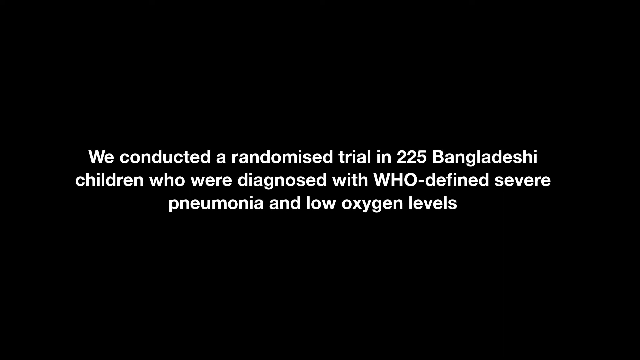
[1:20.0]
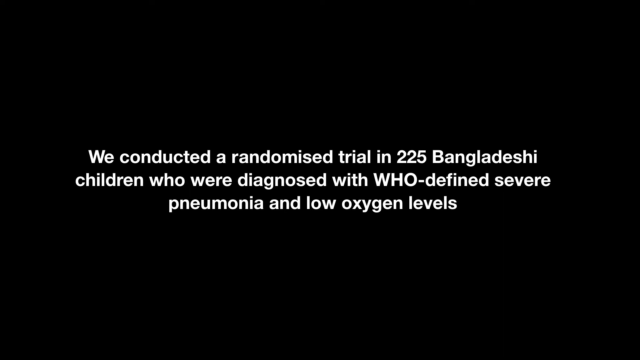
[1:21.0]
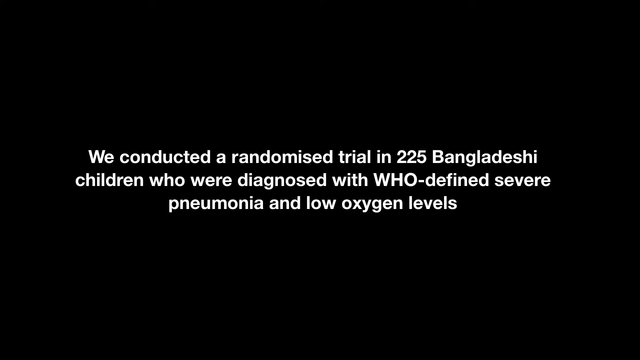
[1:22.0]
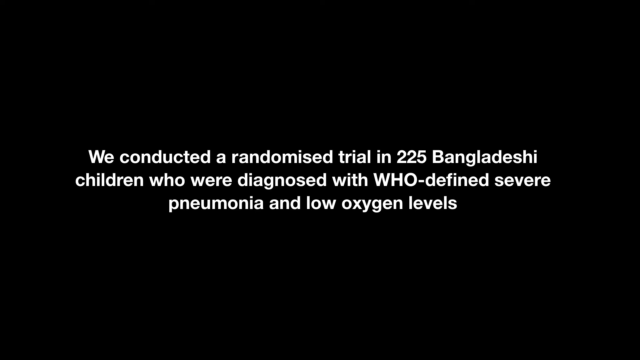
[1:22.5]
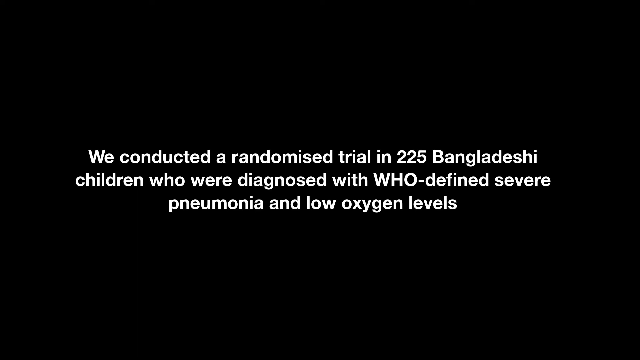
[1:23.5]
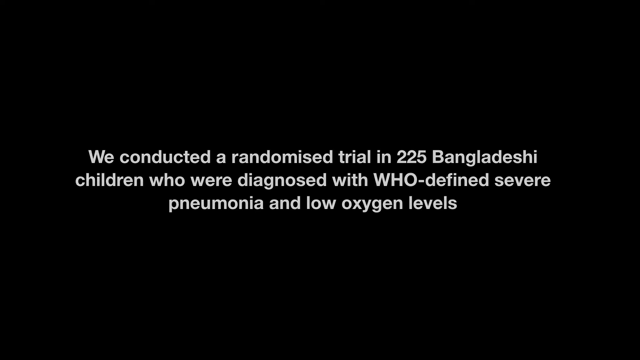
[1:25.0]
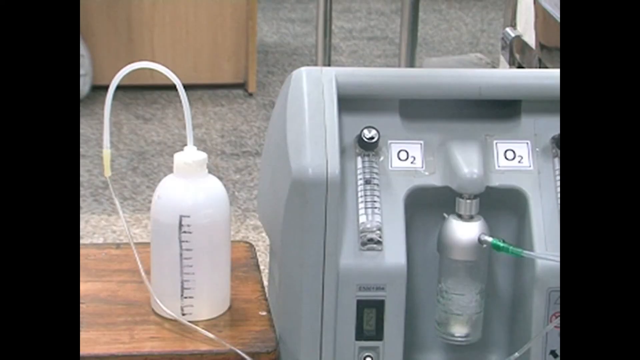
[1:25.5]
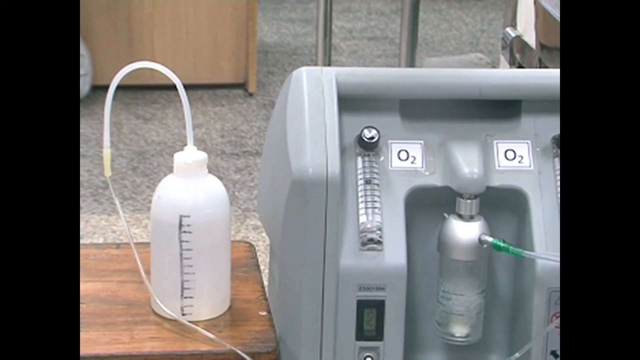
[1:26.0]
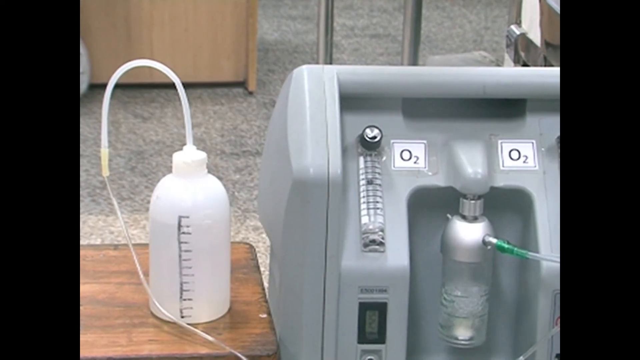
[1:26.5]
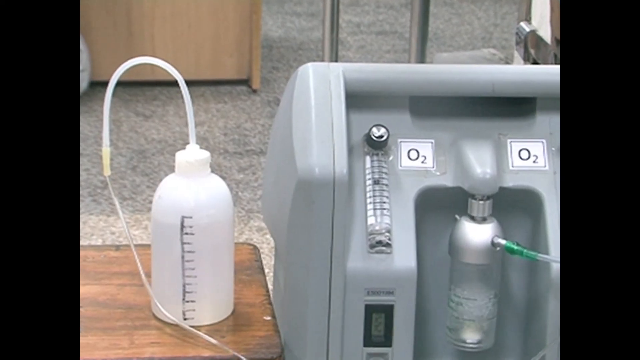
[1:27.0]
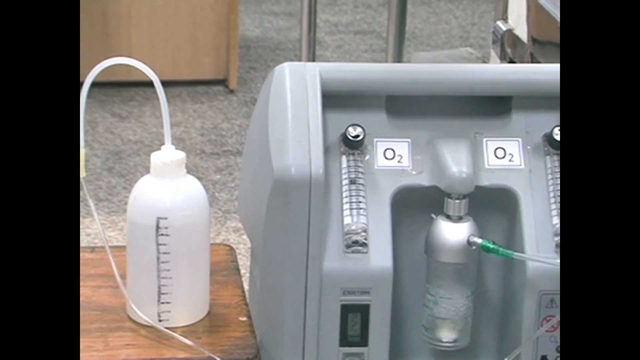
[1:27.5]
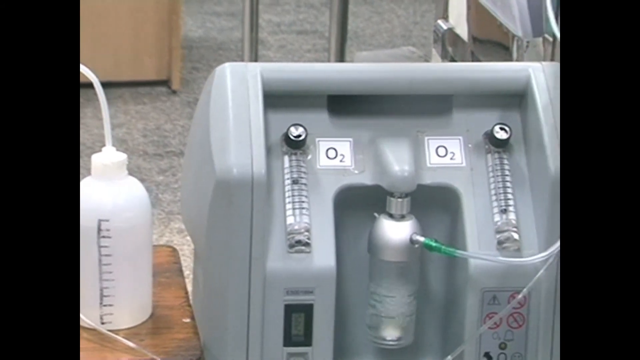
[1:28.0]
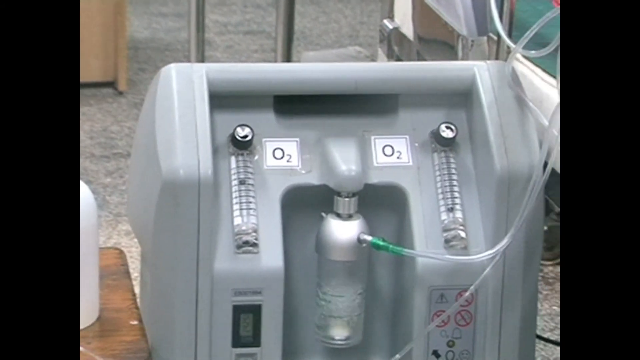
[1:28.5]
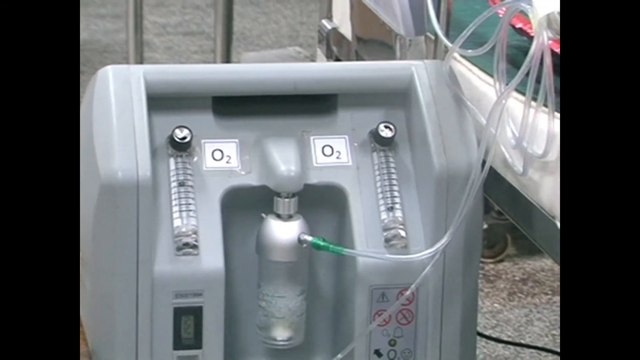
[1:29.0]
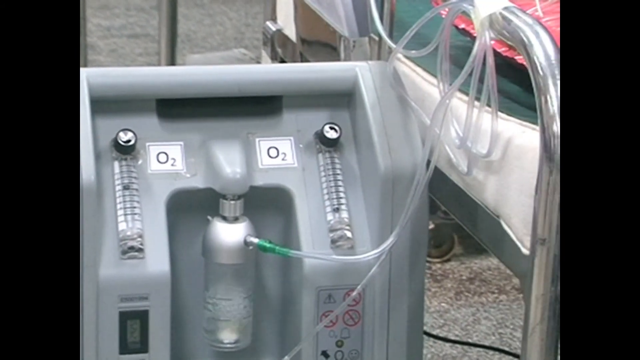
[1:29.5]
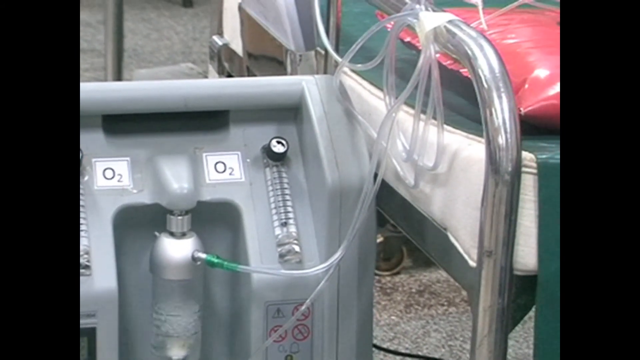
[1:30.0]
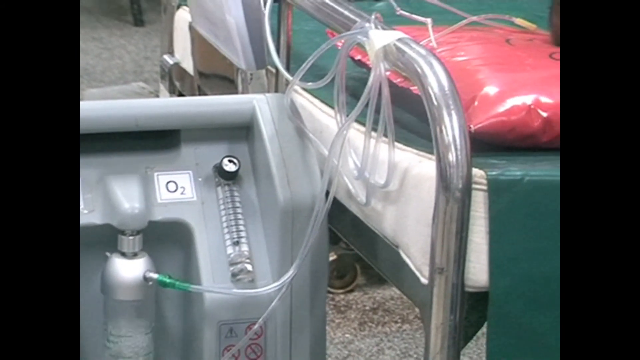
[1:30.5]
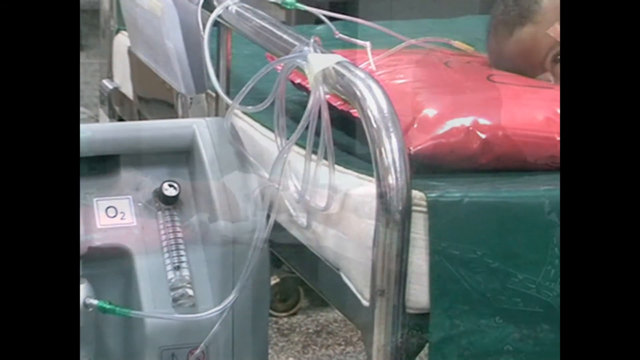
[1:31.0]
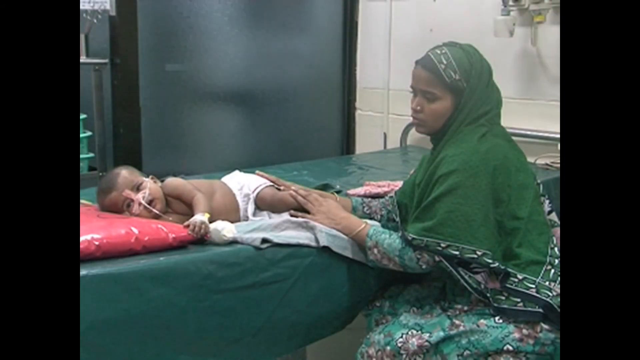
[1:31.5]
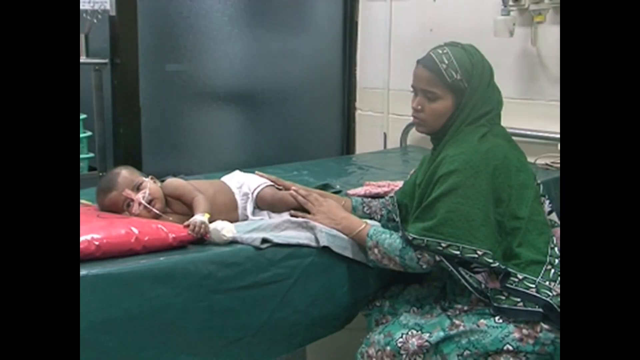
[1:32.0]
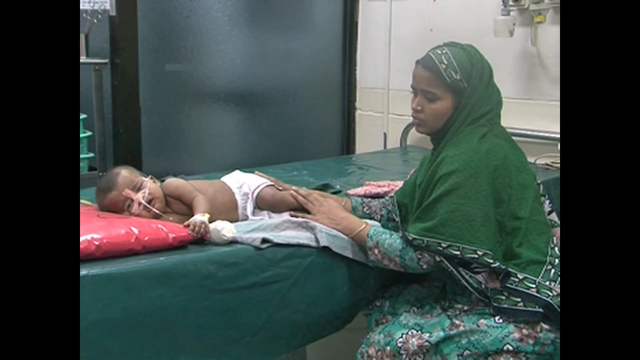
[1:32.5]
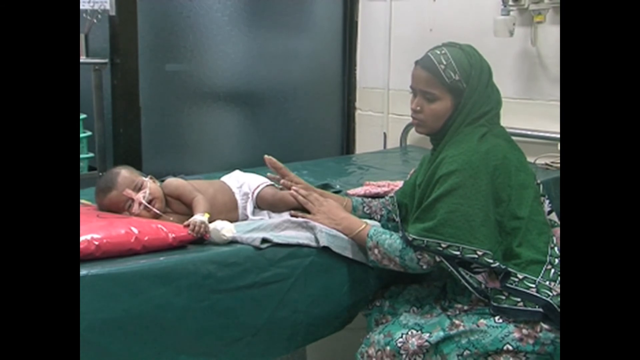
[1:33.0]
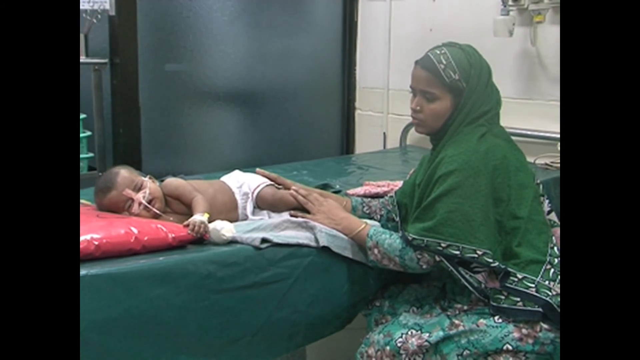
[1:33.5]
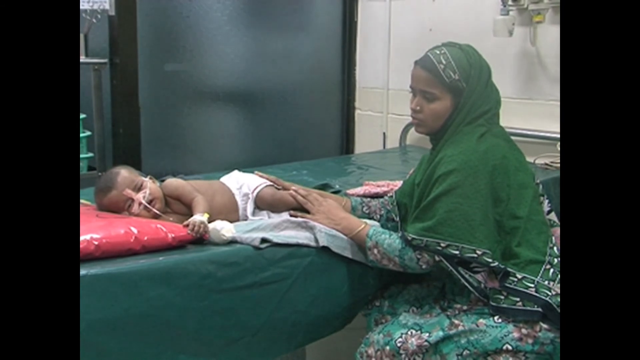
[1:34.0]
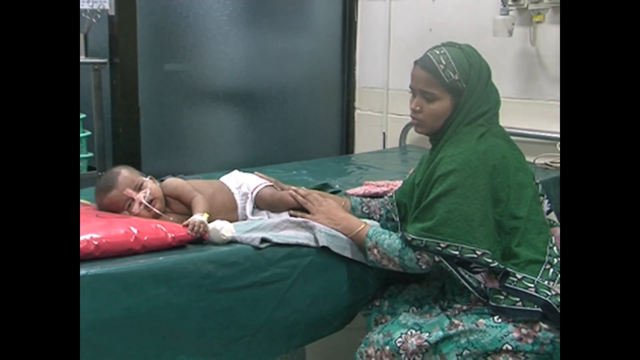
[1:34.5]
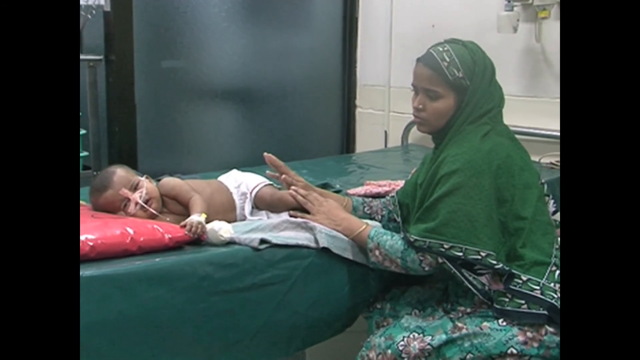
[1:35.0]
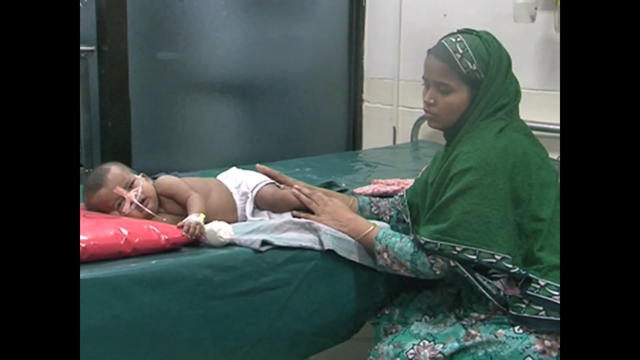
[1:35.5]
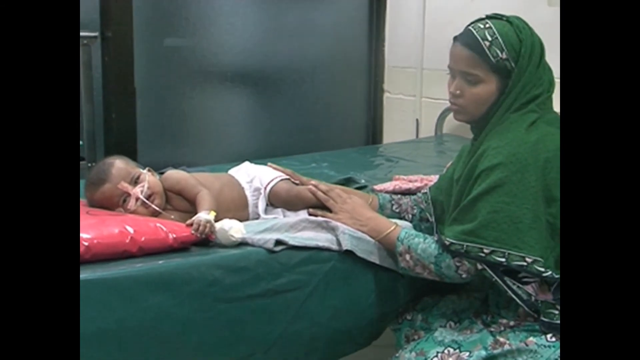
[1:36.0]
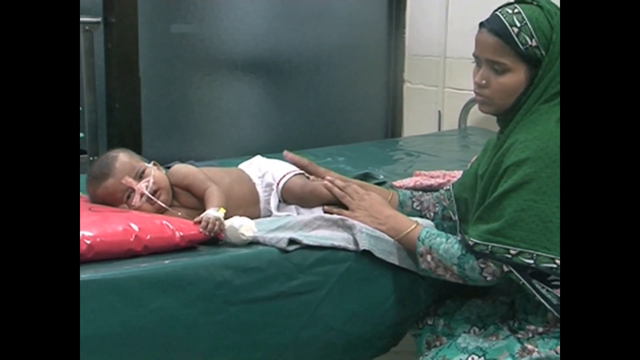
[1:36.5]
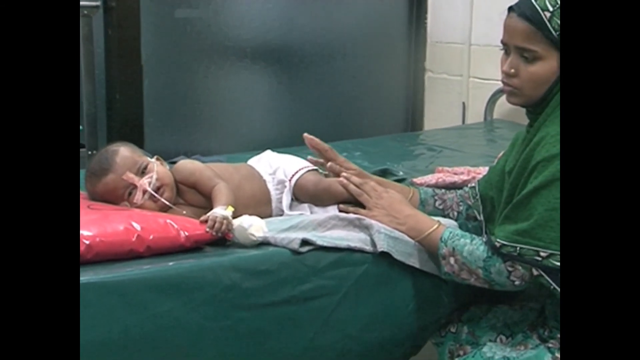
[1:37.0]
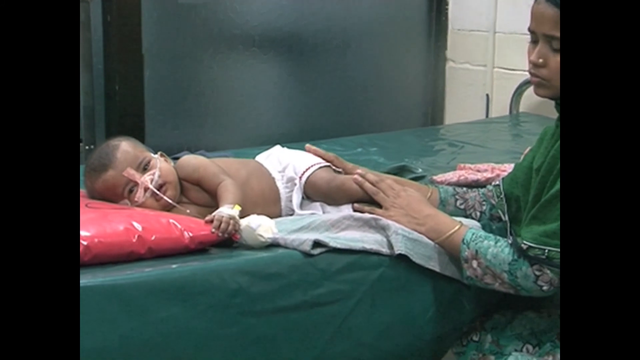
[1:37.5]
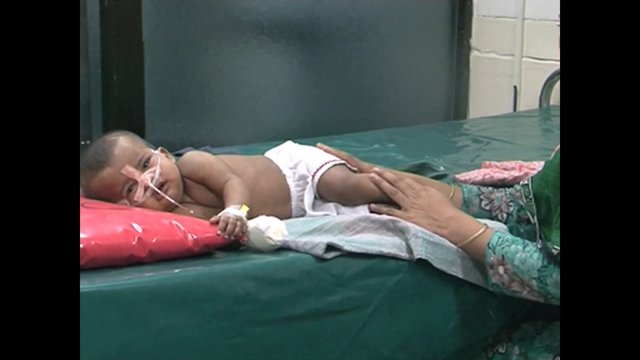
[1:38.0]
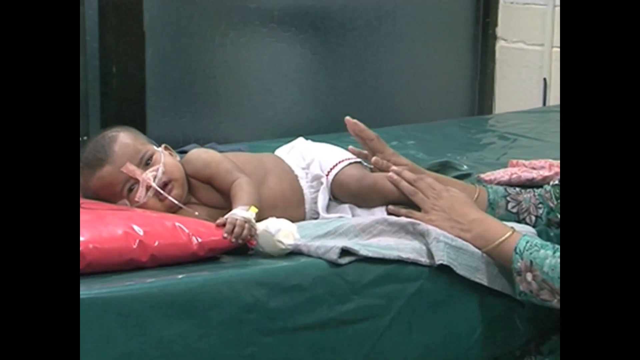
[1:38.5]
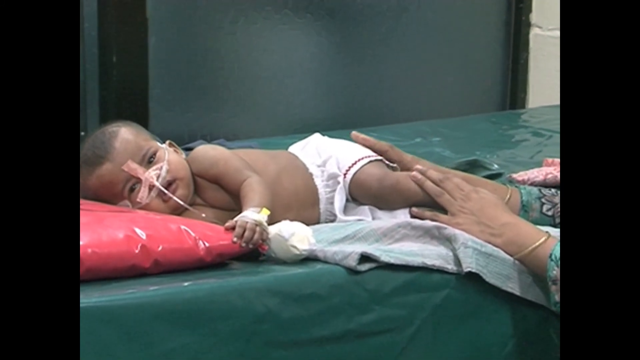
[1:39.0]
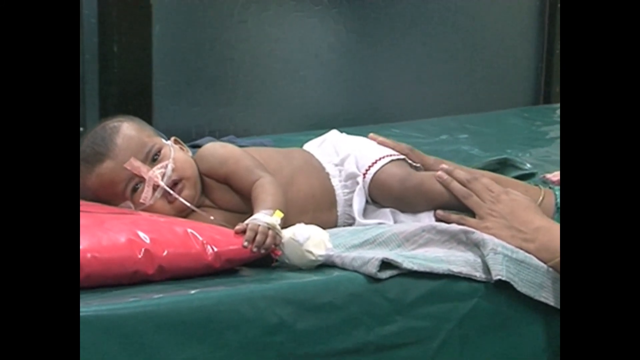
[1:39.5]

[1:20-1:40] The video cuts to the machine, which is grey with two knobs on either side and stickers below them showing red circles with crosses through them, indicating what not to do with the machine. "O2" appears in two places, on the left-hand and right-hand sides. A table next to the machine has a bottle on it, and multiple wires come off the machine, connected to the baby seen at the start. The baby starts to cry and the mother continues to tap it in a comforting way. The video slowly zooms in on the baby, who looks directly at the camera and sticks its left arm out; various stickers on its face strap it to the machine.